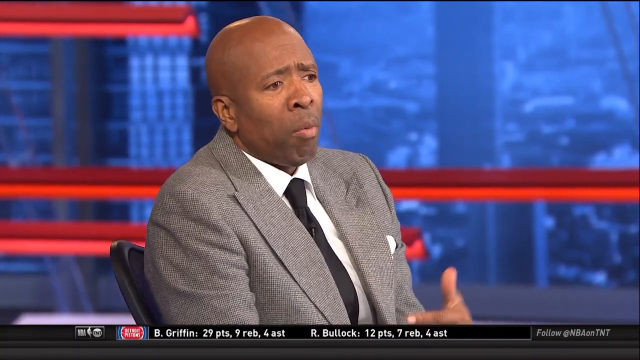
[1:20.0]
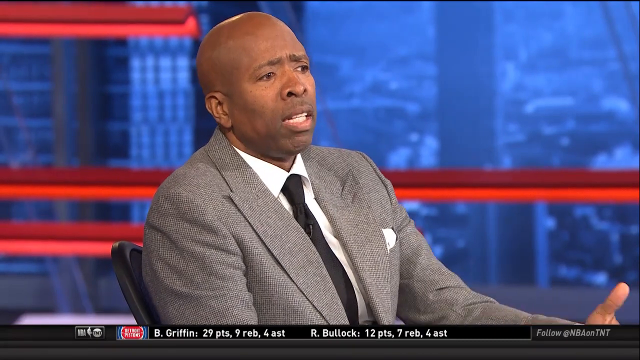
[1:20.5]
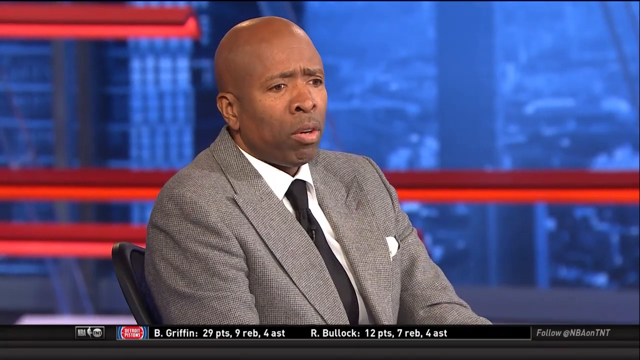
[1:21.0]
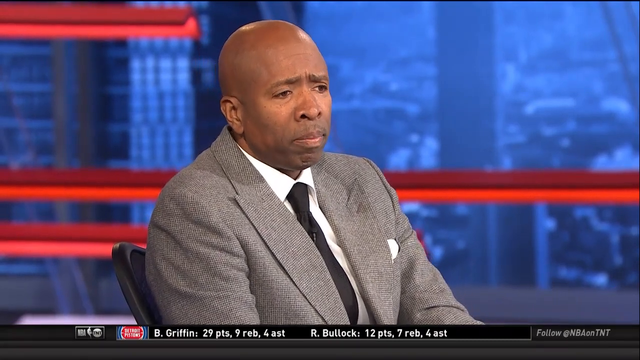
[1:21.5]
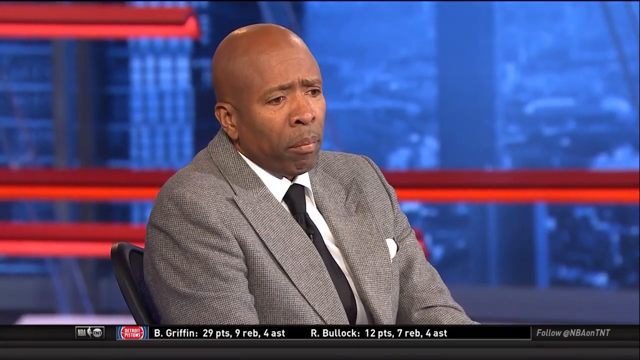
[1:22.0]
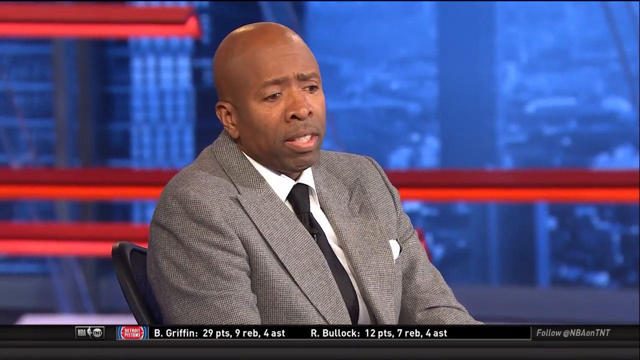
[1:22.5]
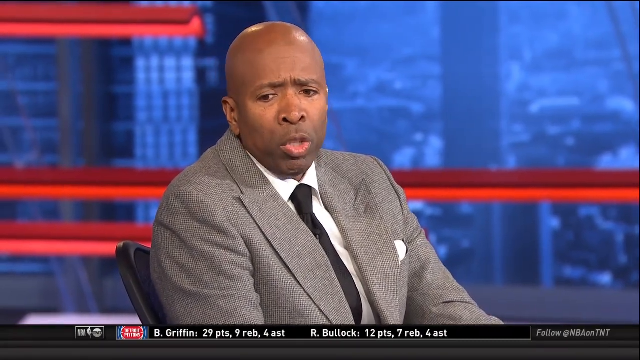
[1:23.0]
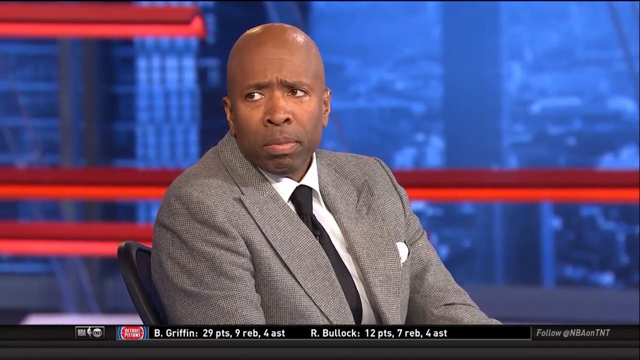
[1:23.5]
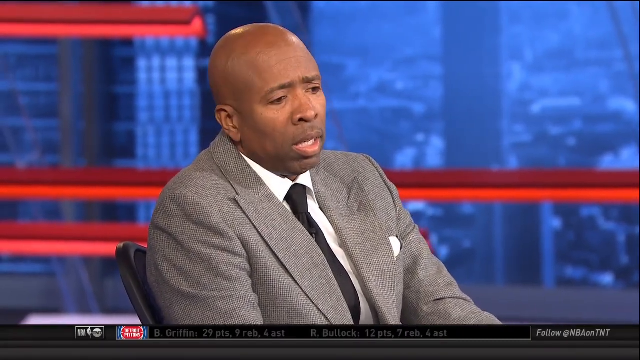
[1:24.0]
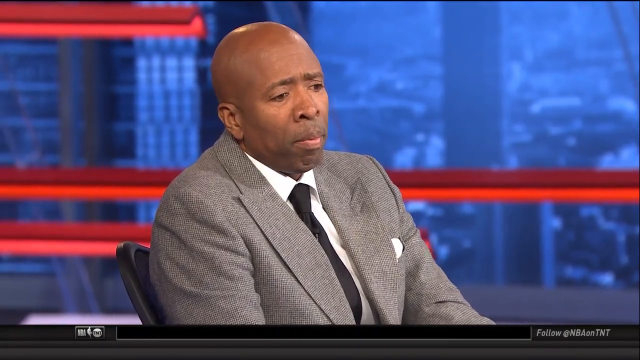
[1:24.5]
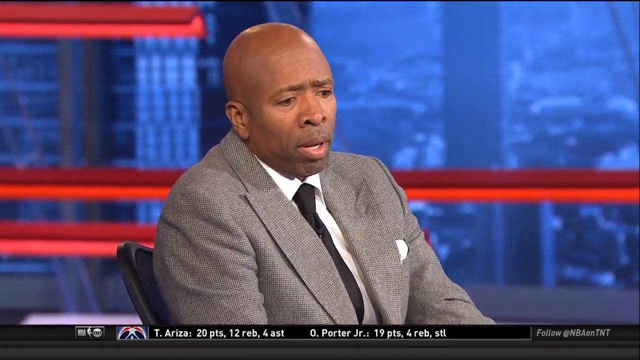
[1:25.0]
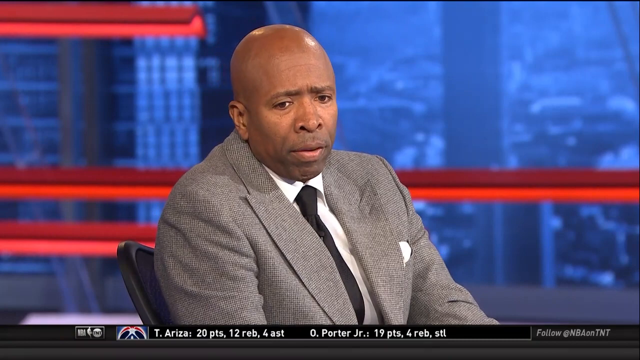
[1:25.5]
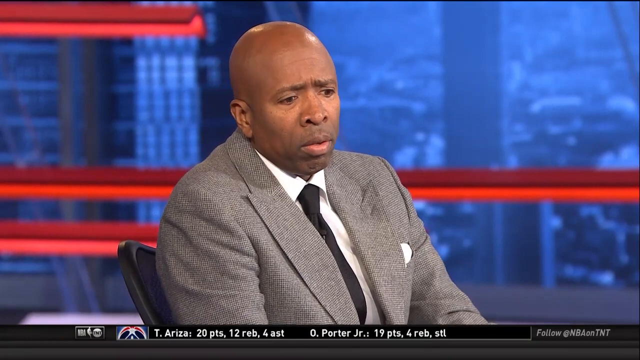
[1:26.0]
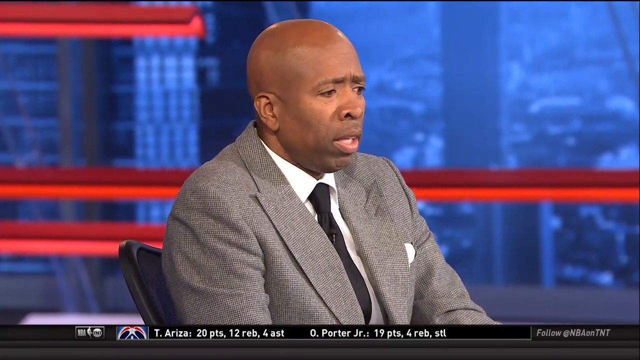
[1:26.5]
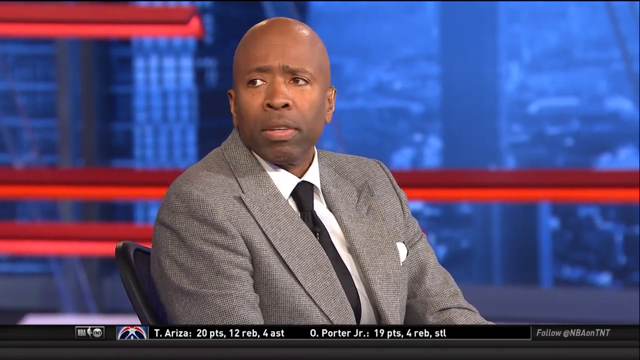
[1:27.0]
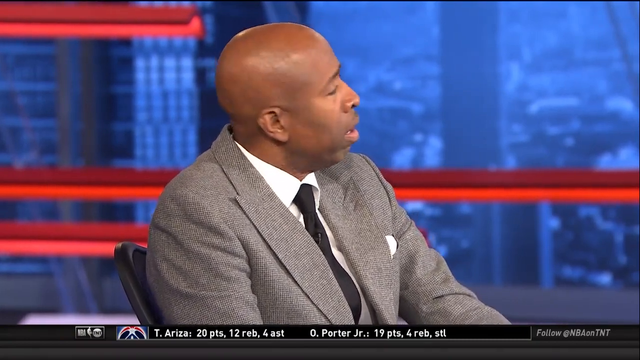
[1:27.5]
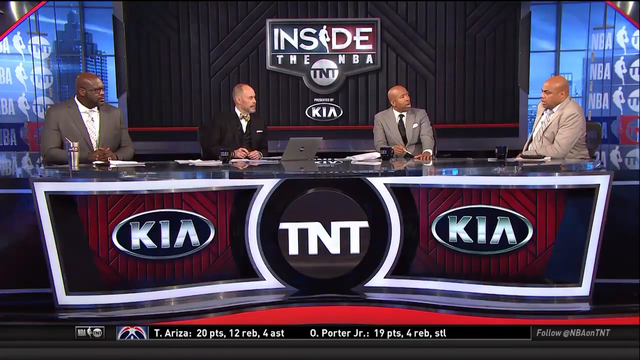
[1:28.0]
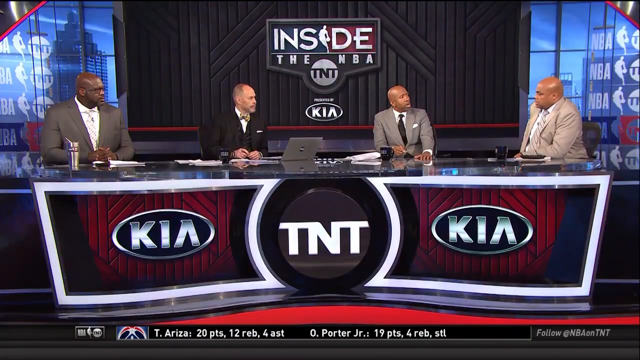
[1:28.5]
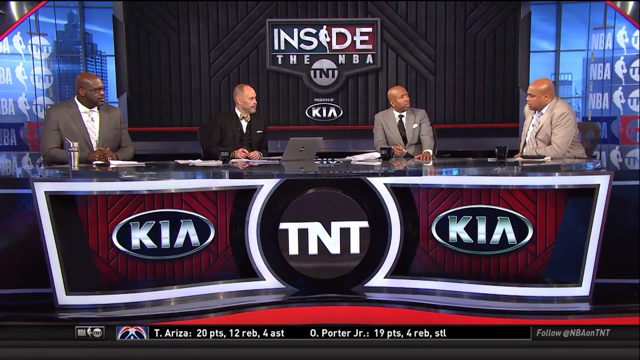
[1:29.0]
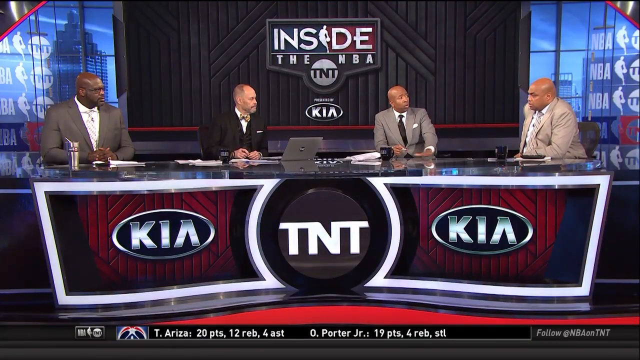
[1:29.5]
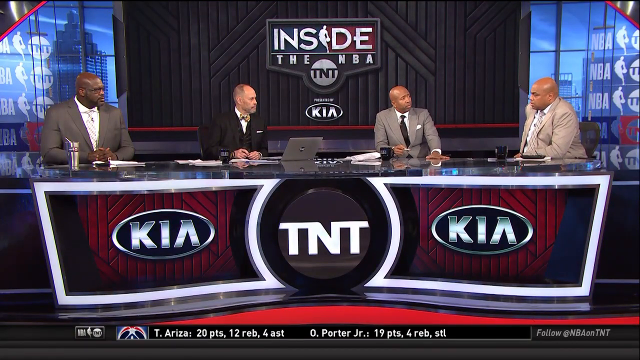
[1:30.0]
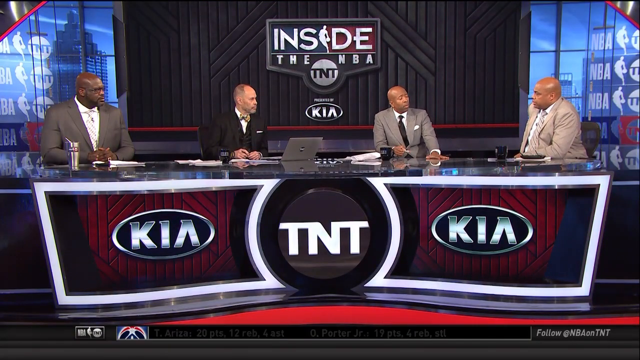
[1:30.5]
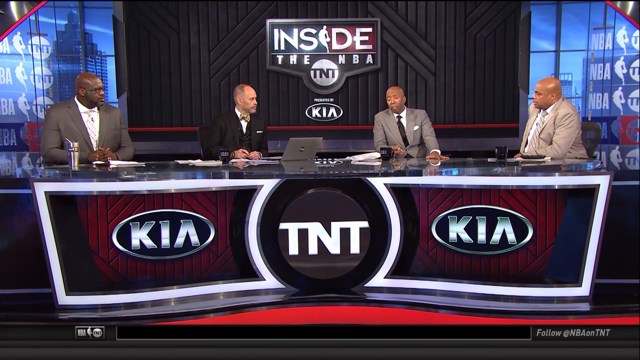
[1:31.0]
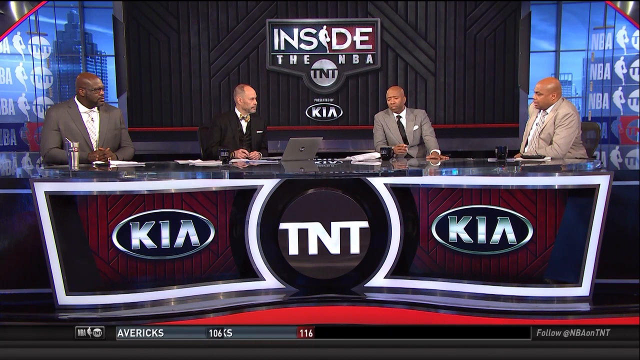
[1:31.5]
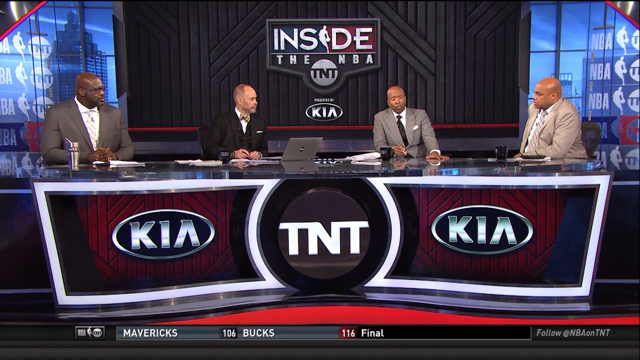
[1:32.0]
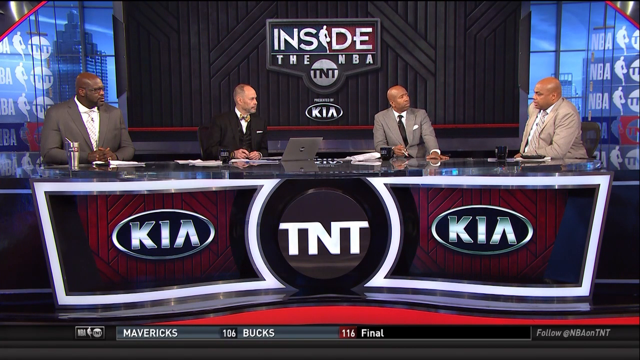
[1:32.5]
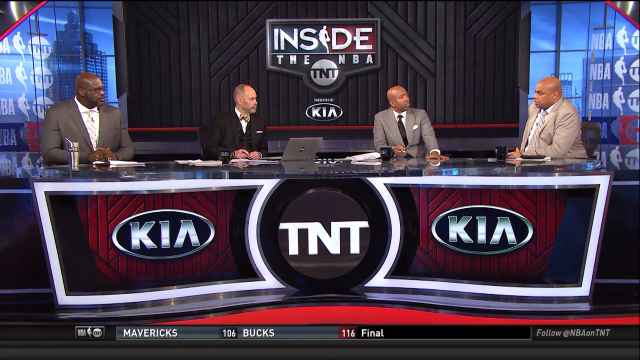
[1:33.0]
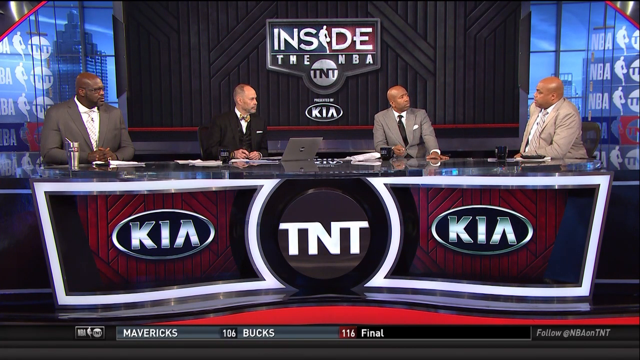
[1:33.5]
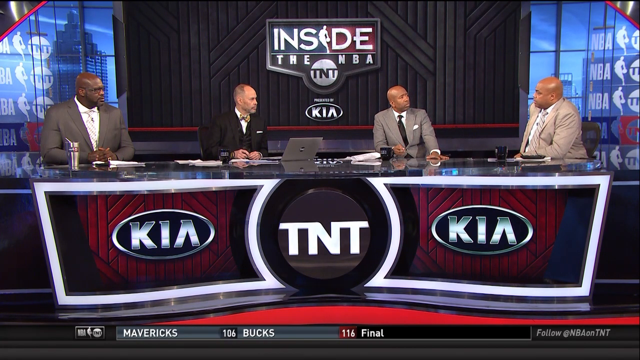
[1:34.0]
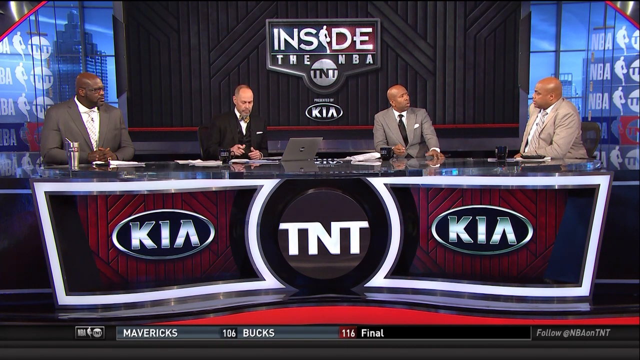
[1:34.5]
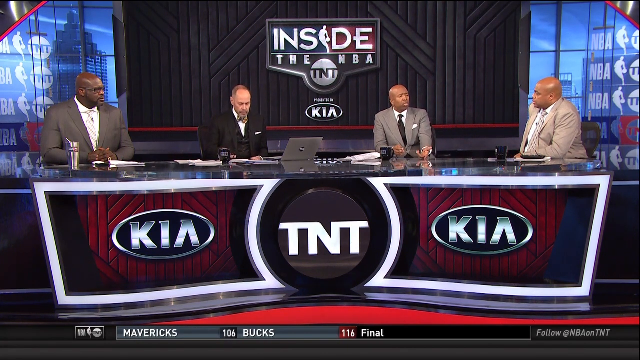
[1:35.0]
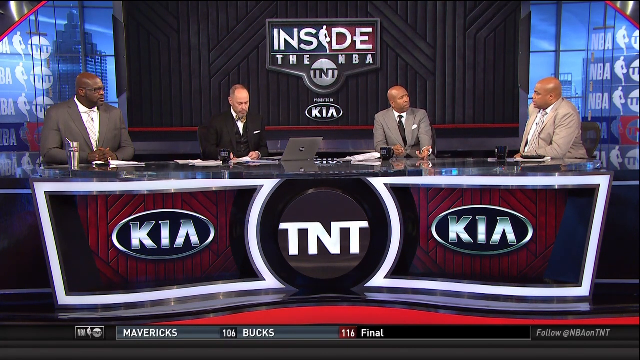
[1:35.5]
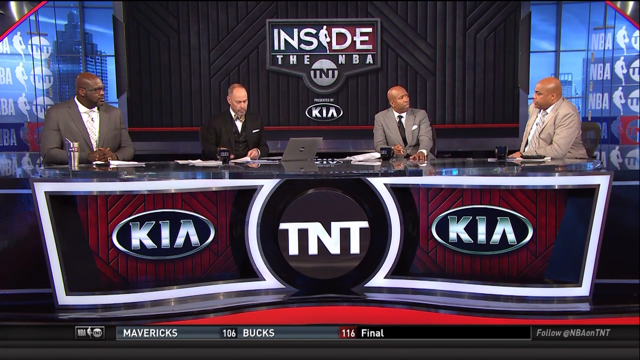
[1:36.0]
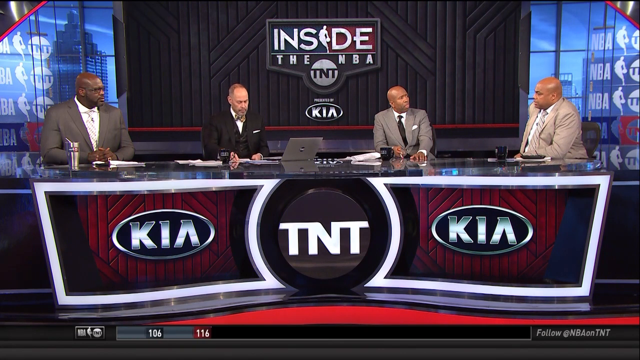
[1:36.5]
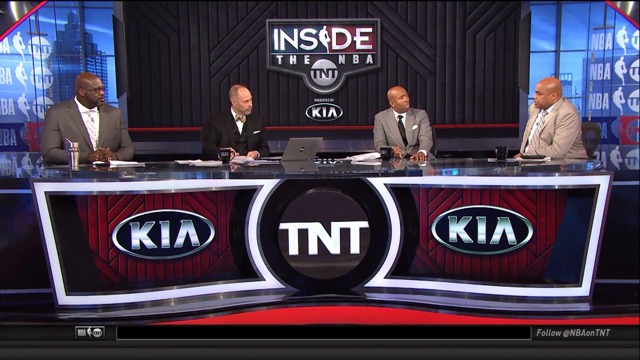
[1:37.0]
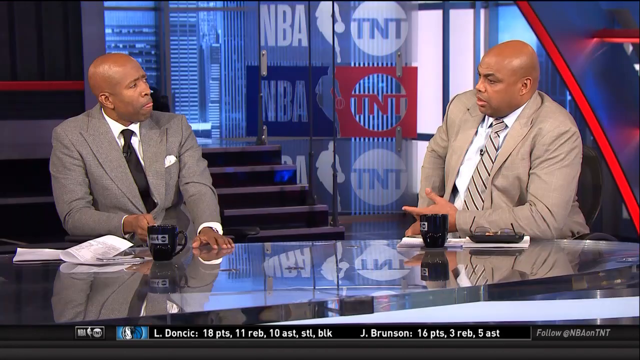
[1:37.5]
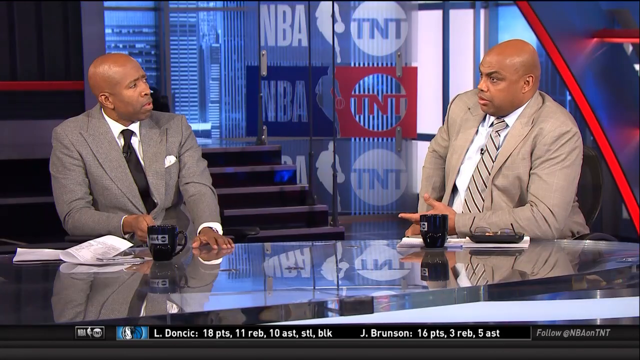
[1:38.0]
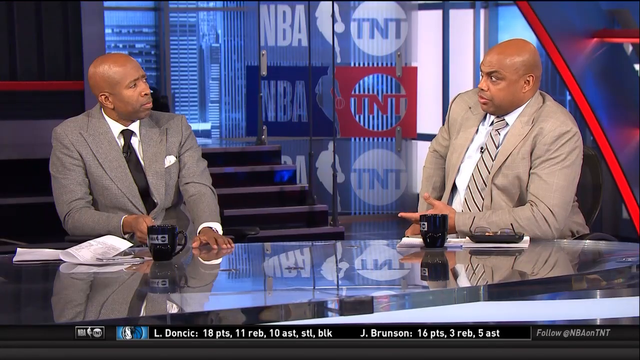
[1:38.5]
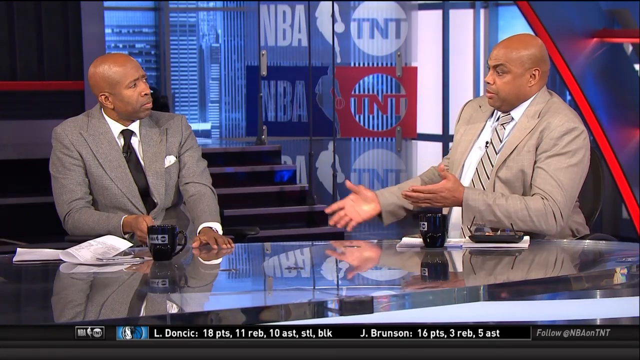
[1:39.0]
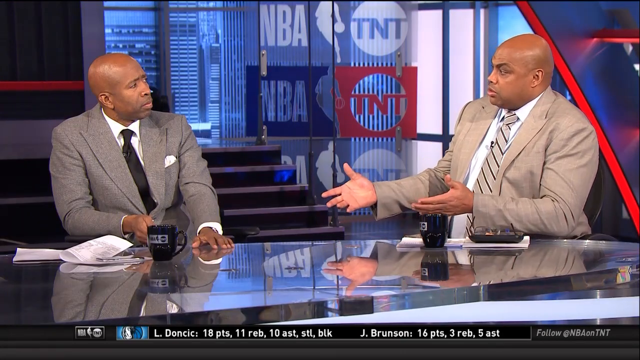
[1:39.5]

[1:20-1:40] A black man in a gray suit, white shirt and black tie speaks to the person to his right. He has a white handkerchief in his left front breast pocket and sits in a black chair. Behind him is a large light blue screen with red stripes running from left to right. The video then cuts to a large black desk. On the left side of its front is a red square containing a black oval with the letters "KIA," and the same is on the right side. In the middle is a black circle with the letters "TNT" in white. Four men sit at the desk speaking to one another. The one on the left is a black man in a gray suit, white shirt and light tie. To his left is an almost bald white man in a black suit, white shirt and bow tie. To his right is a black man in a white shirt, black tie and gray suit, and to his right is a black man in a tan suit, white shirt and tan striped tie. Behind him is a black wall with "Inside the NBA" in the middle, a white circle with the letters "TNT" in black underneath, and beneath that a black oval with the letters "KIA" in white.